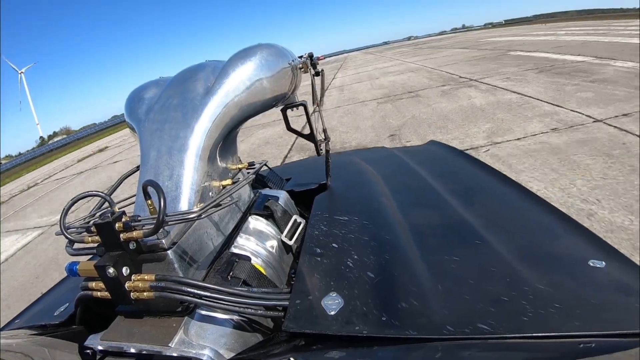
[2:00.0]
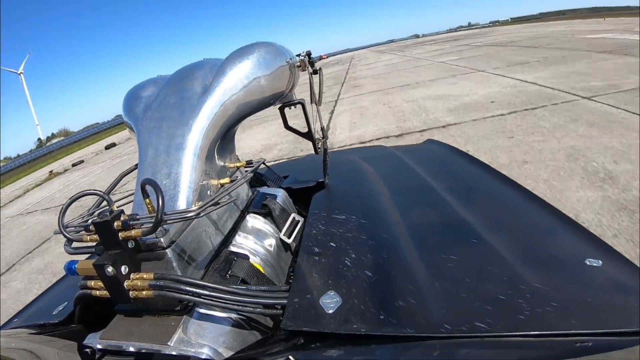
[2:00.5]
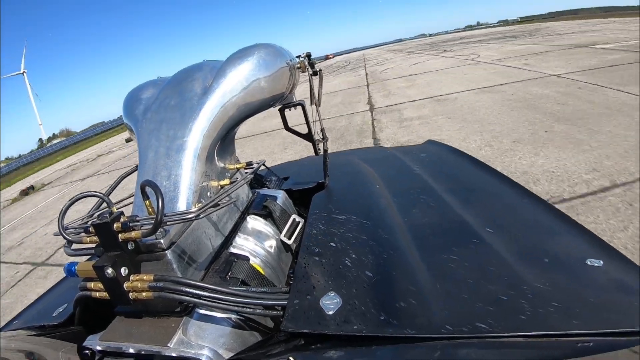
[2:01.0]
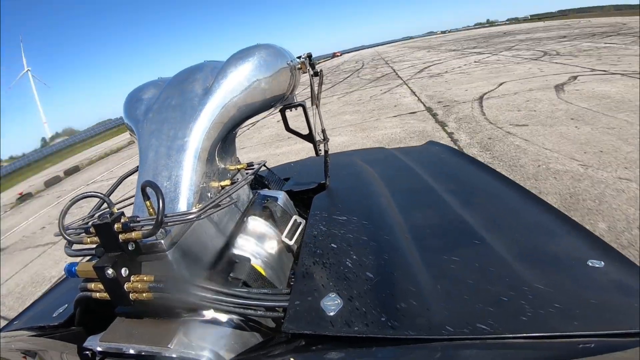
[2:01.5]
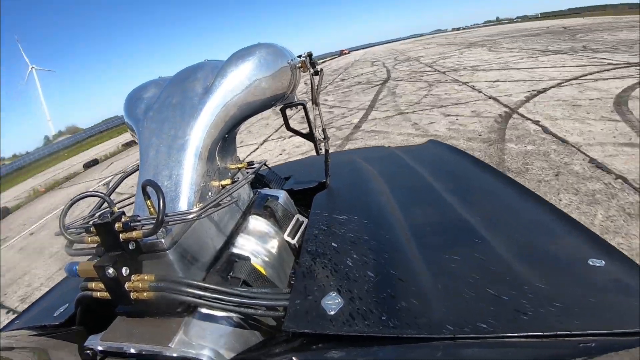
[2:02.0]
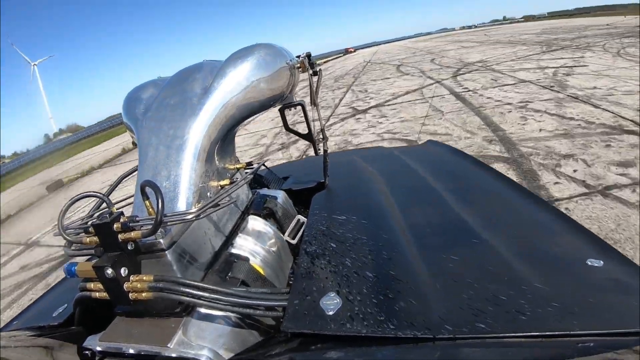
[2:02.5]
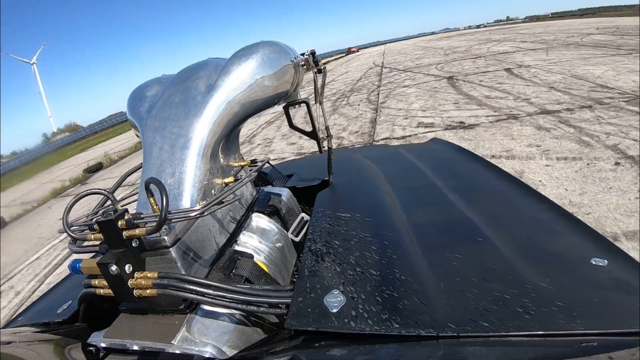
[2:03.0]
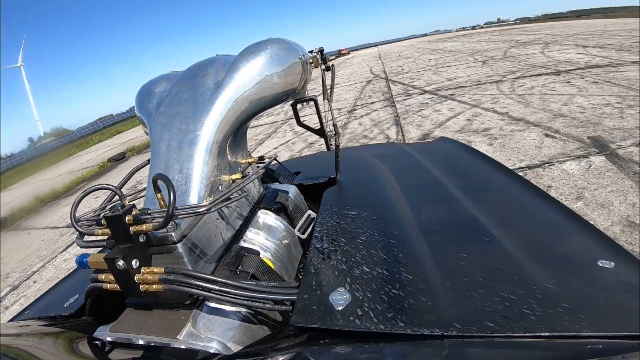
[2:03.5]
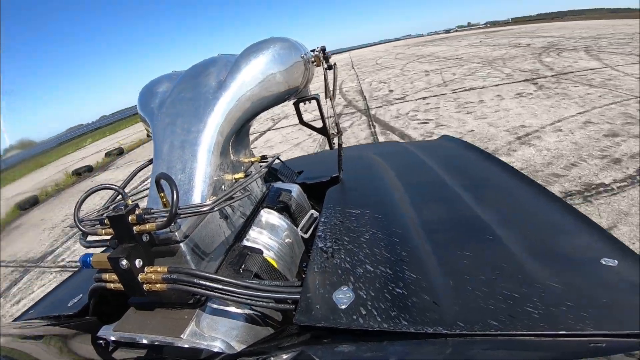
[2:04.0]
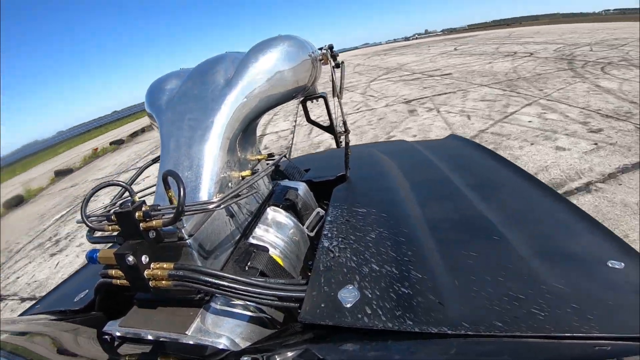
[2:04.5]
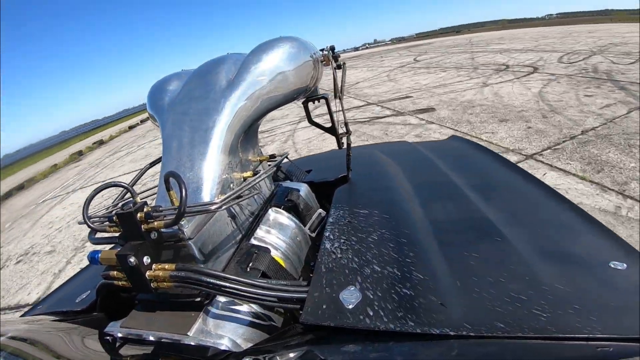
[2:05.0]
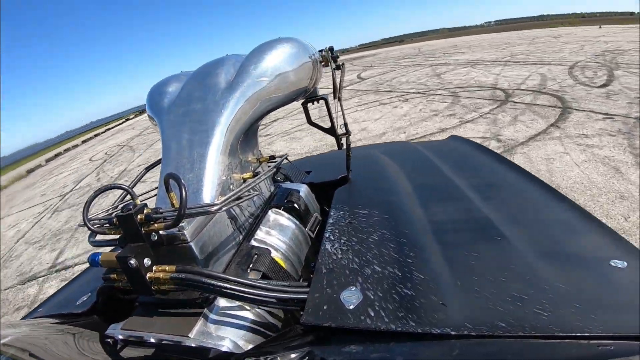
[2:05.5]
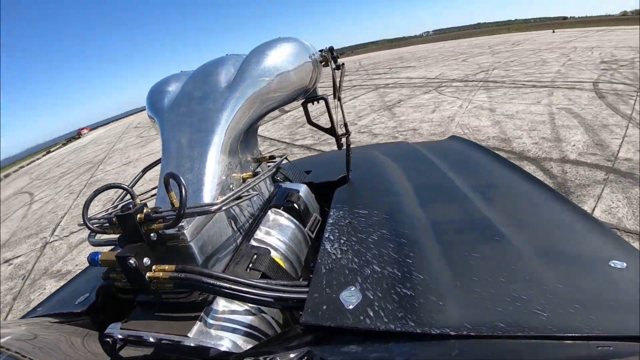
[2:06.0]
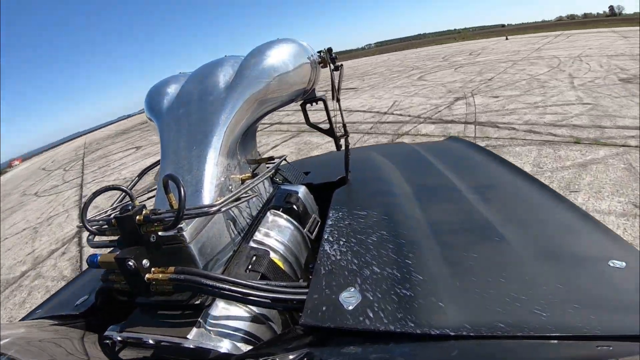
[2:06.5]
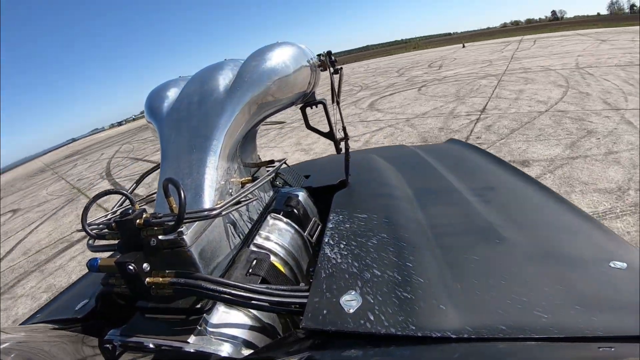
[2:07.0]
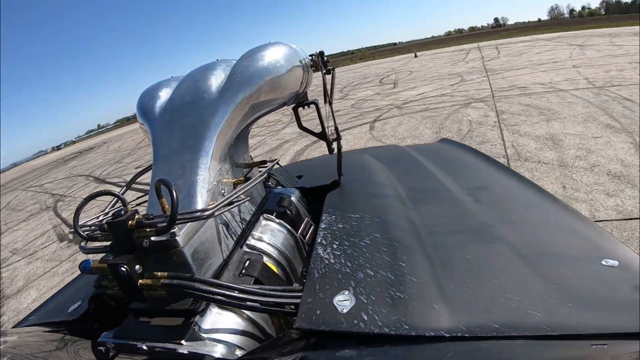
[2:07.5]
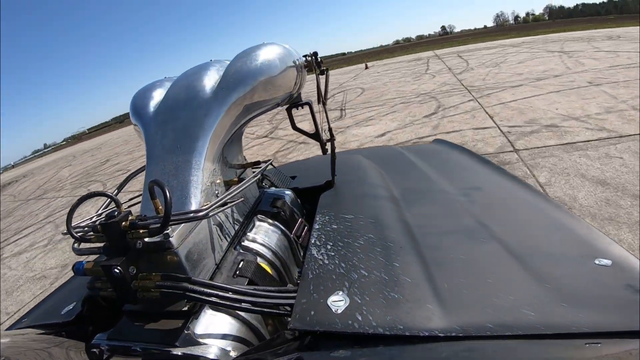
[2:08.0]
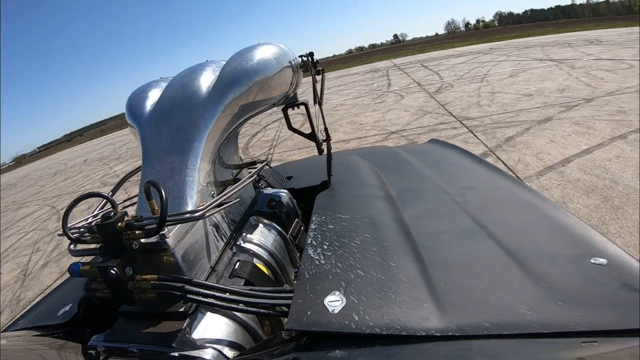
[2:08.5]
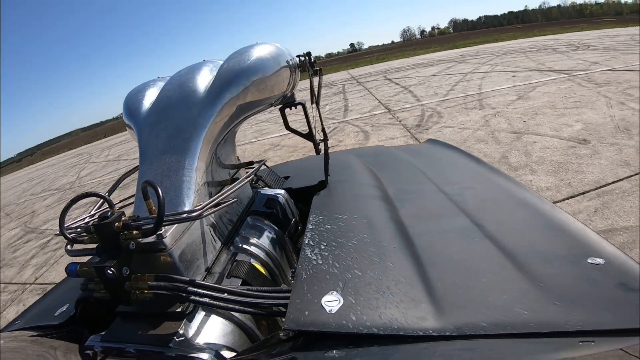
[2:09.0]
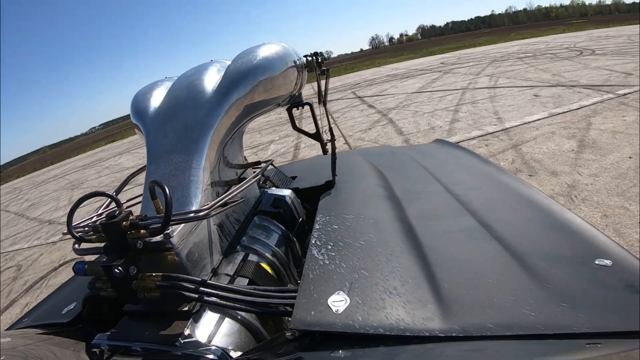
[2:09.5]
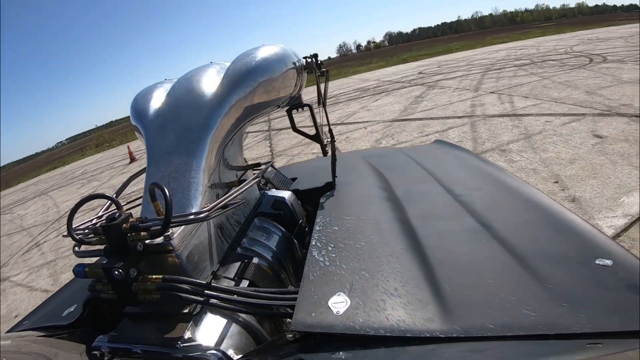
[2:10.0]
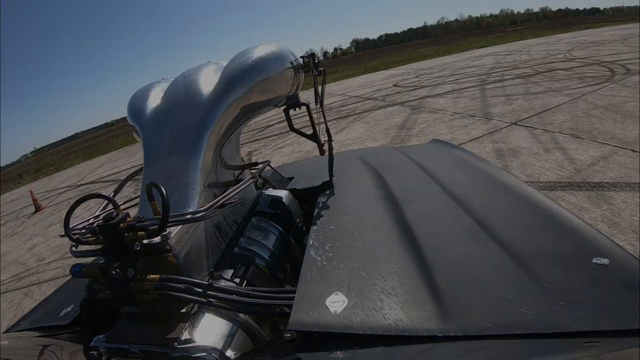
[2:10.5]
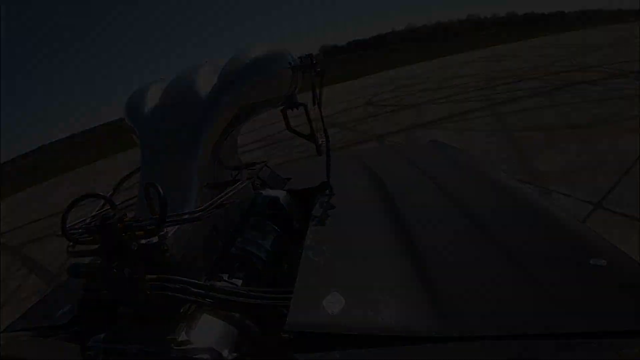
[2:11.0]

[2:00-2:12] A gray drag racing car goes down a racetrack, but not too fast. A few seconds in, the car slows down and turns directly to the right. A line of trees and a few orange cones are in the distance, and a windmill is in the far distance on the left. Something silver sticks out of the car's hood with wires around it, and there is dirt on the hood. The metal piece on top of the car vibrates as it goes down the racetrack, but stops vibrating at the end.